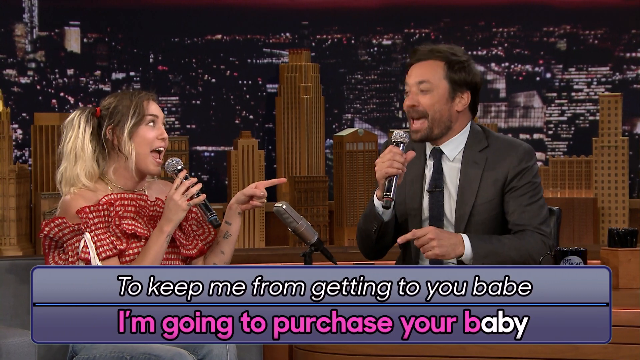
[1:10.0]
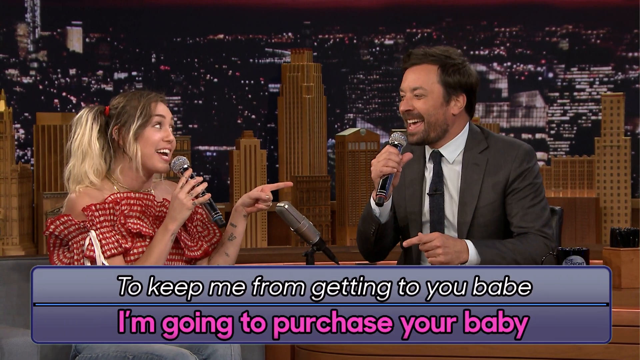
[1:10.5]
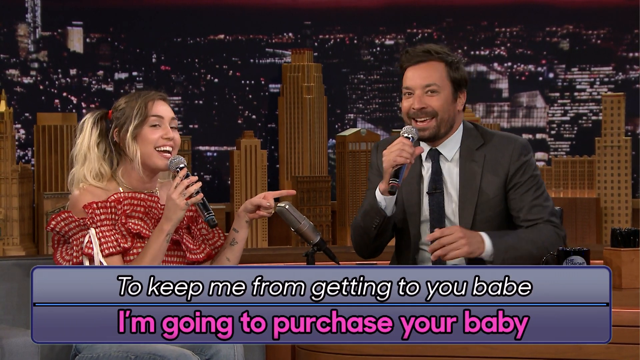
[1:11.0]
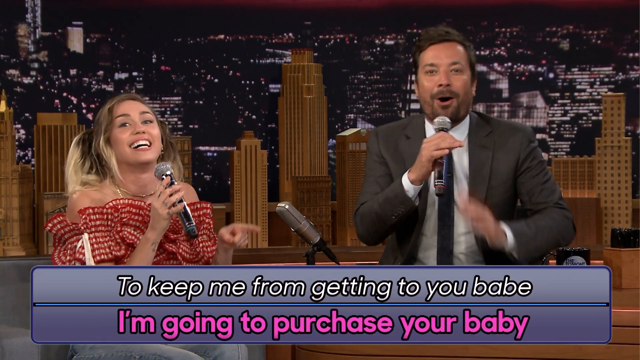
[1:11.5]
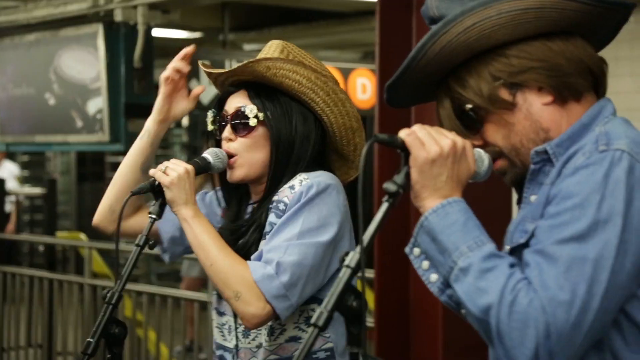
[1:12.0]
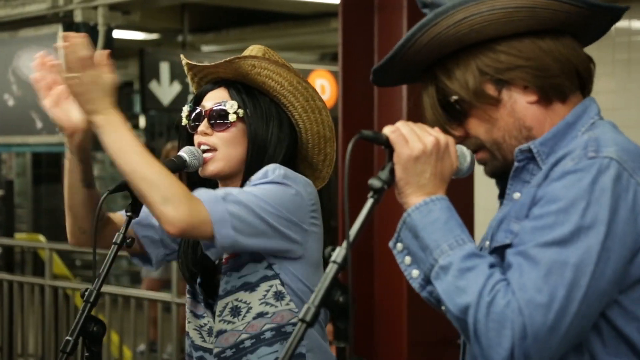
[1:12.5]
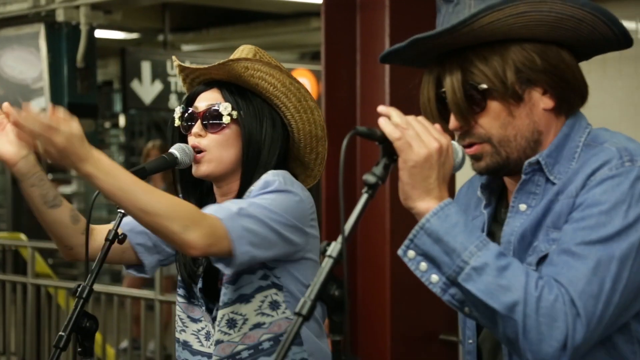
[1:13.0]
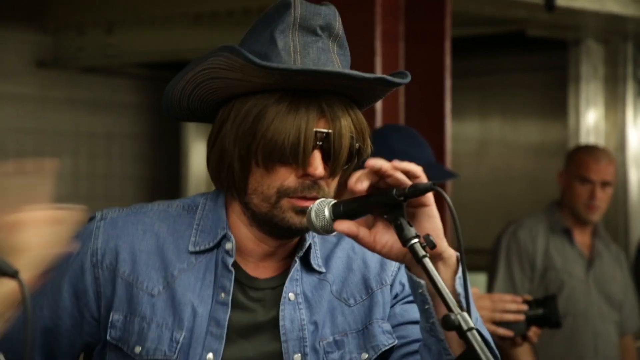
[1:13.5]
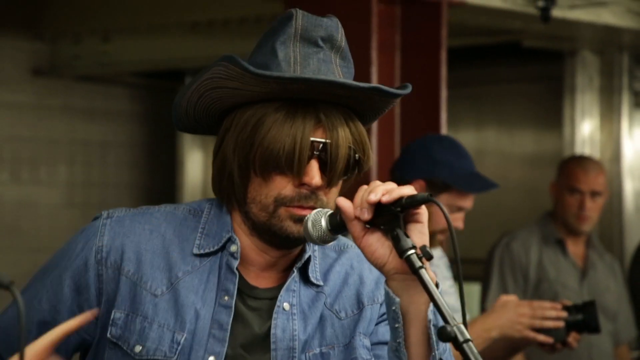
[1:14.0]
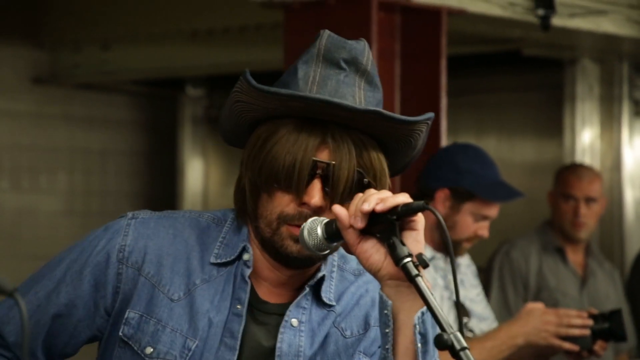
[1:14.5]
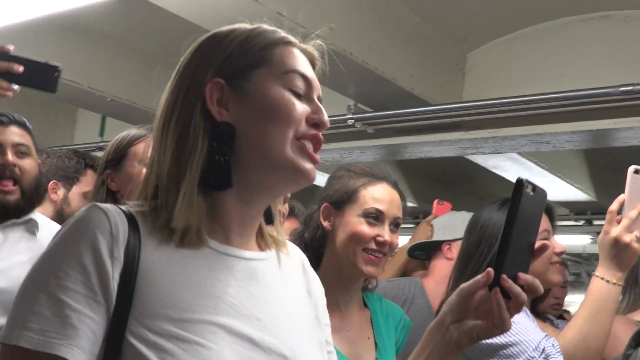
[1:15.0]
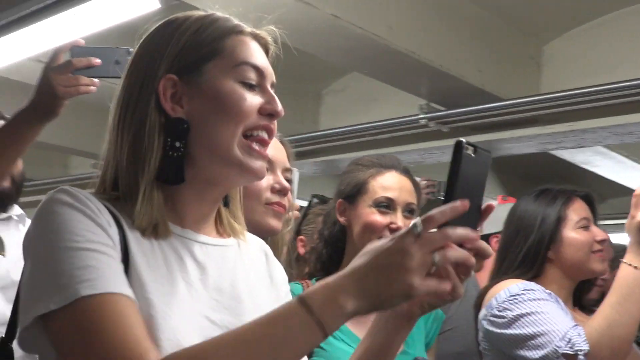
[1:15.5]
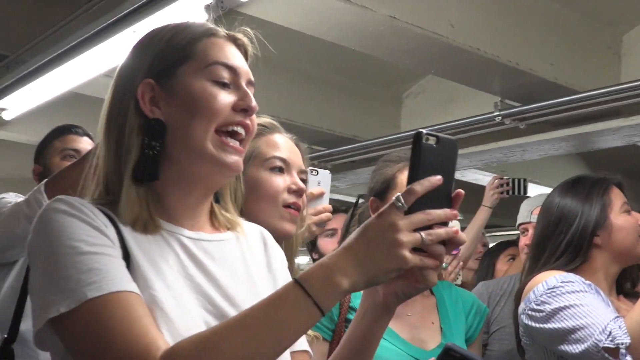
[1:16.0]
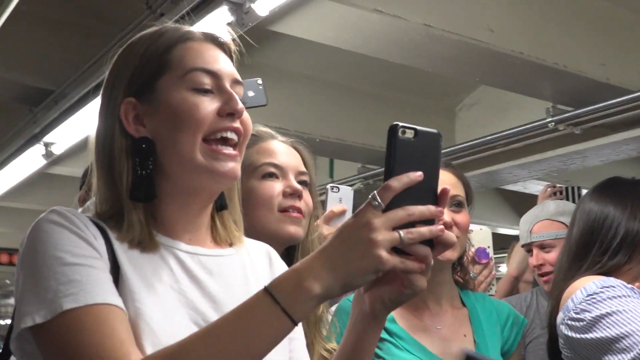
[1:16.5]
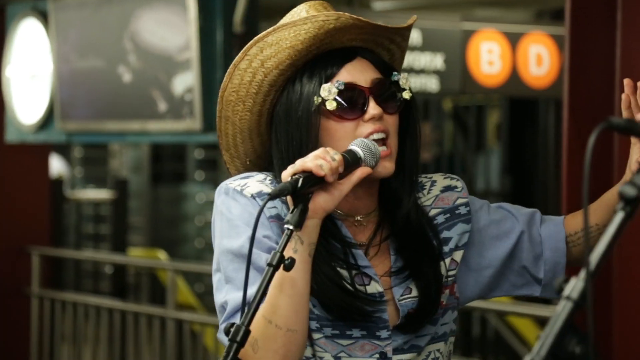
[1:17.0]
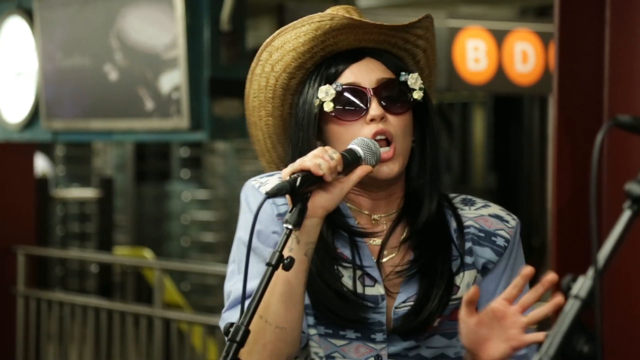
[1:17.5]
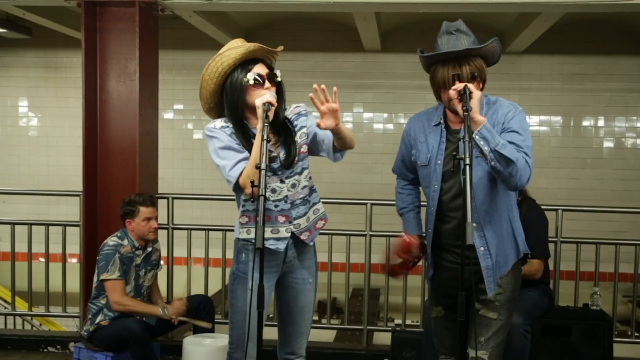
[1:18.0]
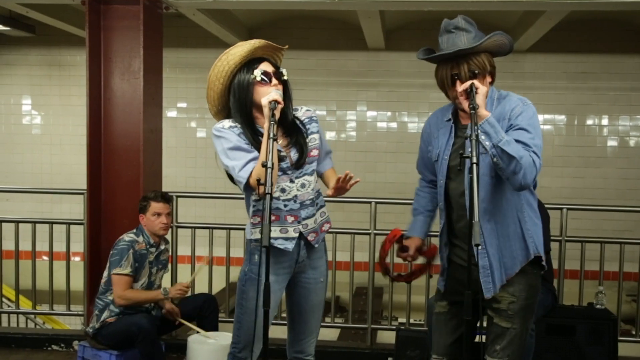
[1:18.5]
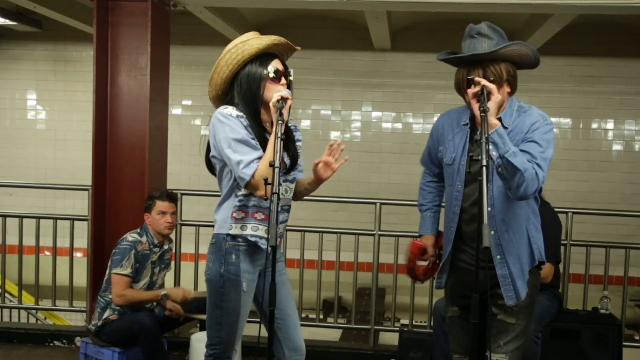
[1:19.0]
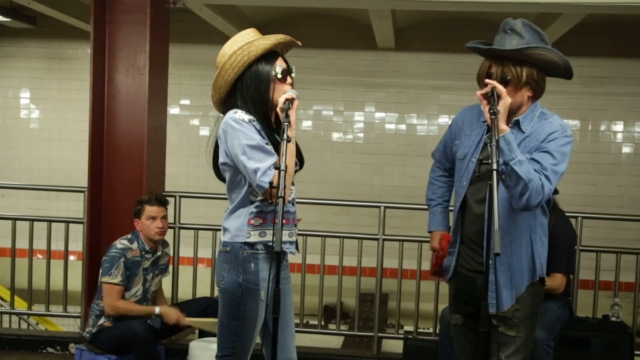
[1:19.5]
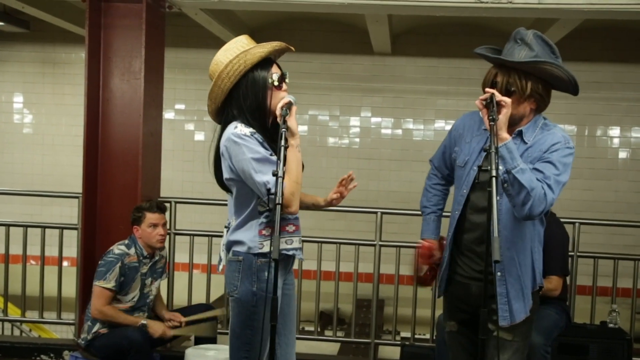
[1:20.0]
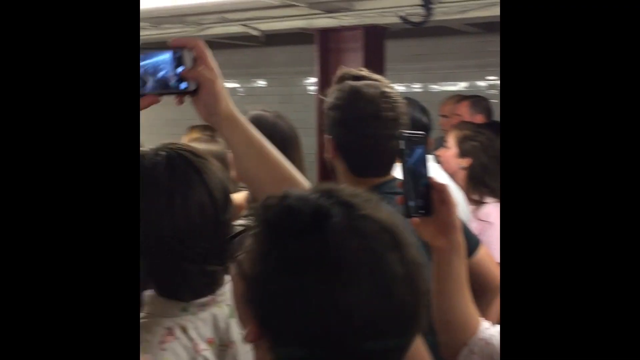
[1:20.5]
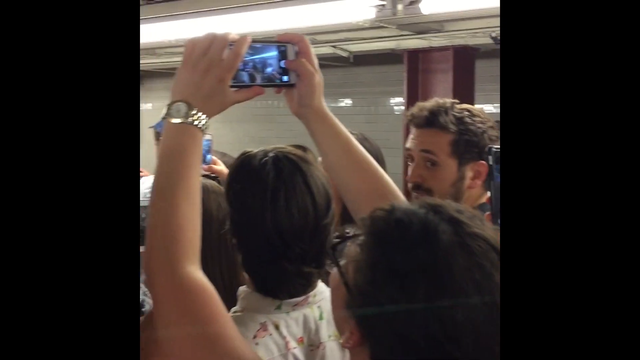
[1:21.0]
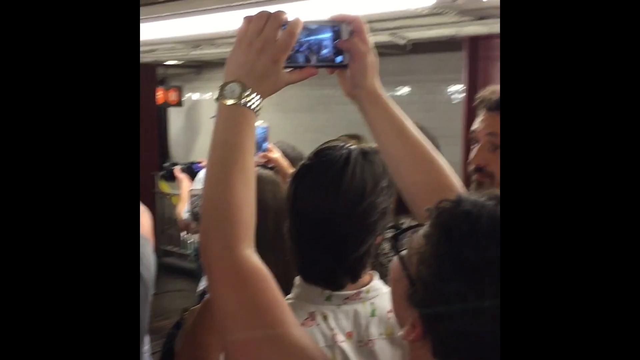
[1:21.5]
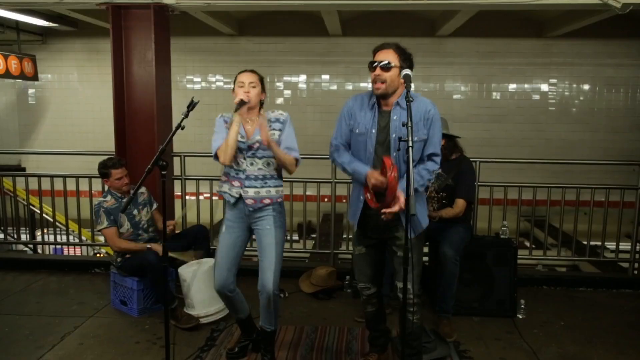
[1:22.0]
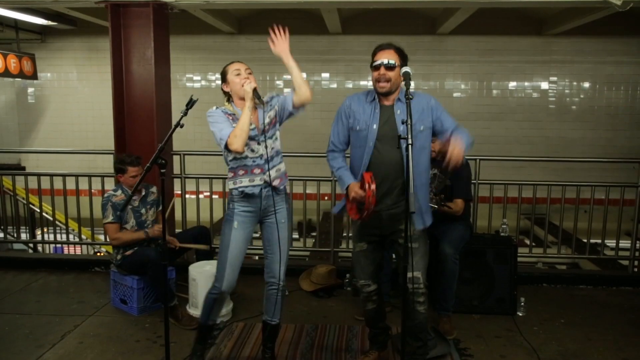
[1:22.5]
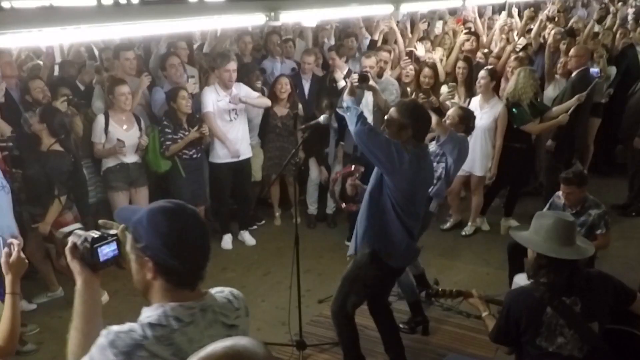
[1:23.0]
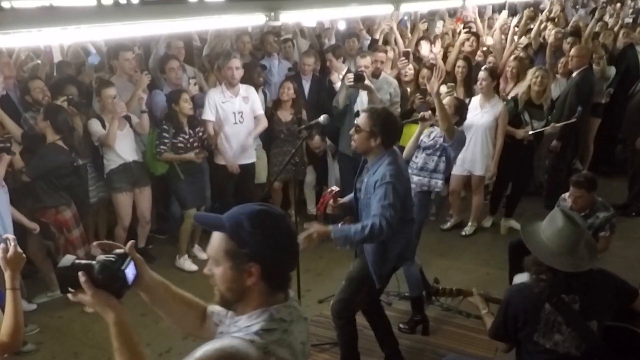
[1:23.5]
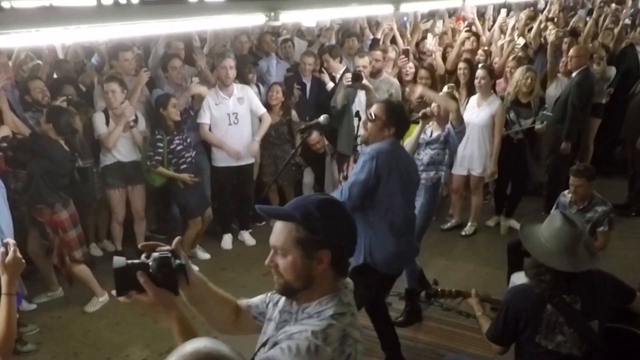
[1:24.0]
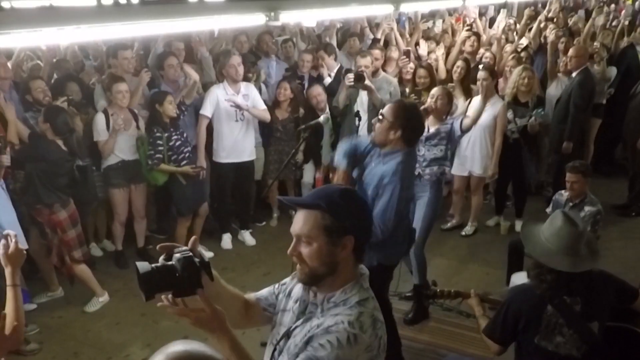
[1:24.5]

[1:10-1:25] Still singing, they look at each other and point at each other. The video cuts to them dressed up as a cowboy and cowgirl, both standing. She wears a straw cowboy hat and kind of a jacket with flannel sleeves, a flannel back and an almost Indian type of design on the front, and has long black hair. She claps her hands and stomps her feet, then holds the microphone in front of her with her right hand and sings, turning toward Jimmy. He wears a black cowboy hat, black sunglasses, an open blue jean shirt with a green shirt underneath, and black pants, and has kind of shaggy brown hair hanging down. He taps a red jingle thing on his thigh, with a microphone in front of him as they both sing. The video cuts to a crowd cheering, phones out, looking mostly women. A man on the left side plays drums on buckets, sitting on a black bucket and playing a white bucket. They look to be in an underground subway station, with a bit of silver railing and big red pillars. The view pans out, showing the crowd of probably about 40 people cheering. Another man in the background plays a guitar, sitting on a black wooden box. The video then cuts to people seen from behind him.